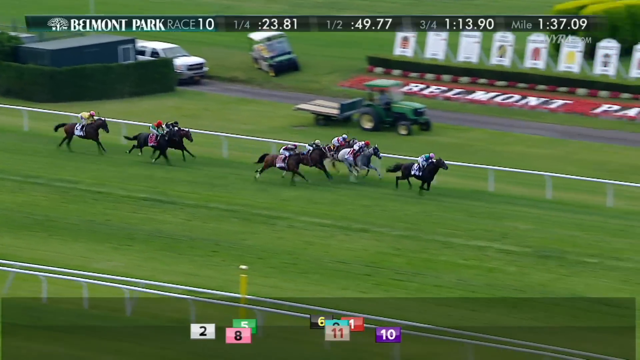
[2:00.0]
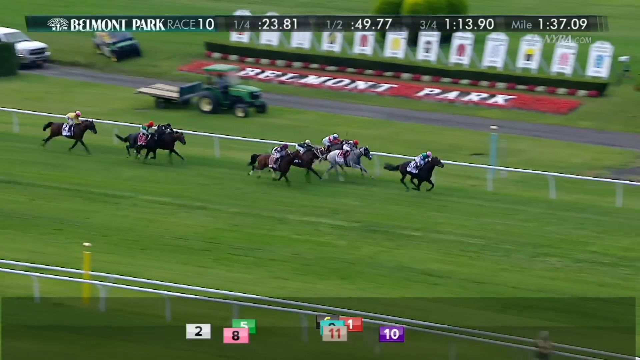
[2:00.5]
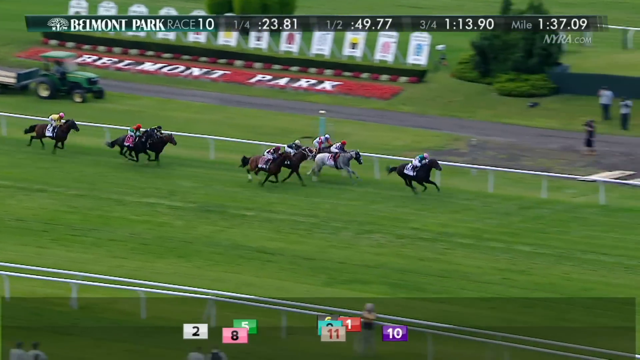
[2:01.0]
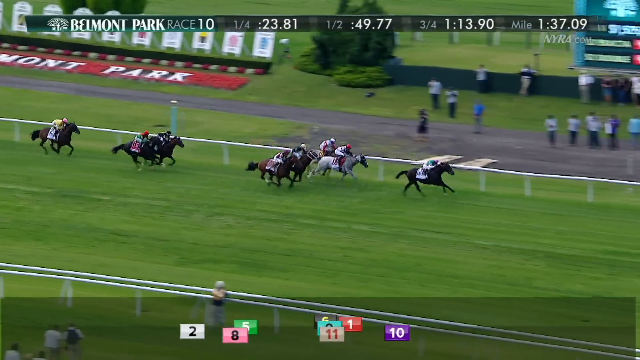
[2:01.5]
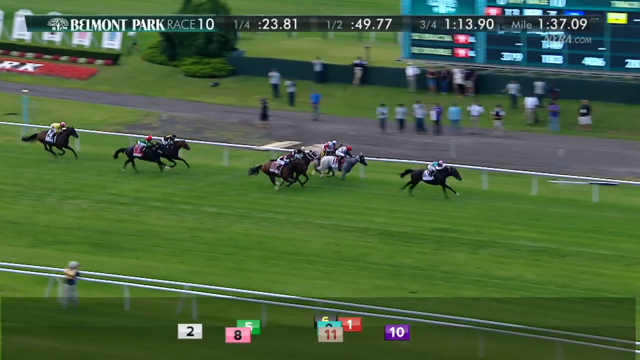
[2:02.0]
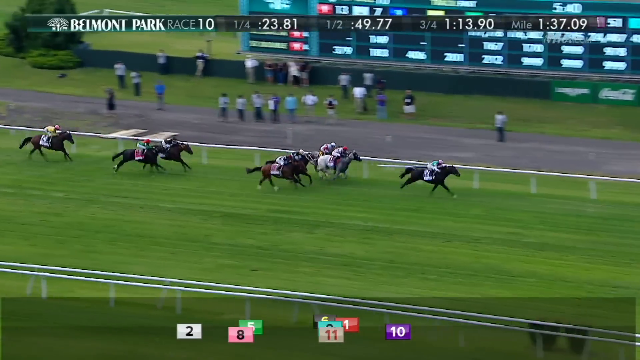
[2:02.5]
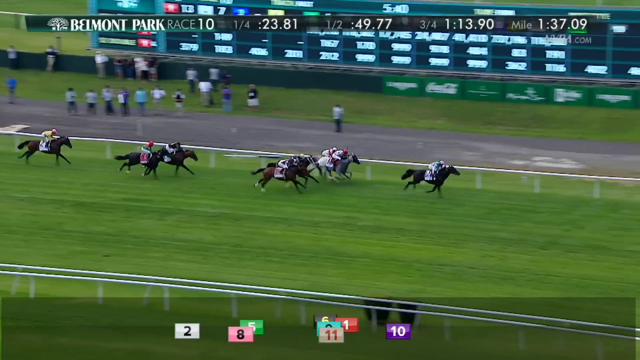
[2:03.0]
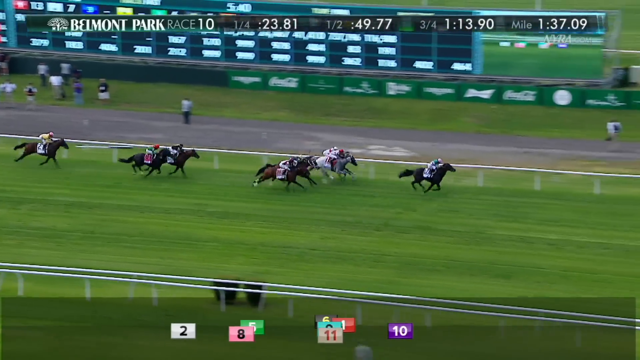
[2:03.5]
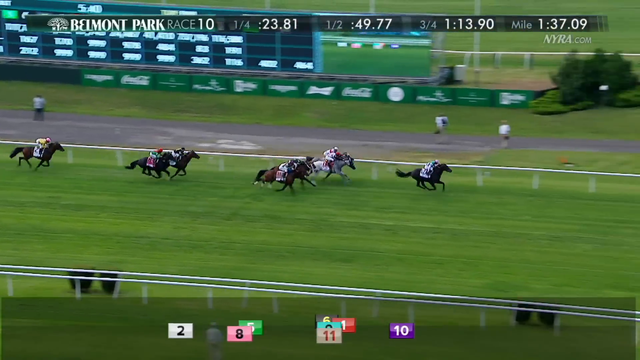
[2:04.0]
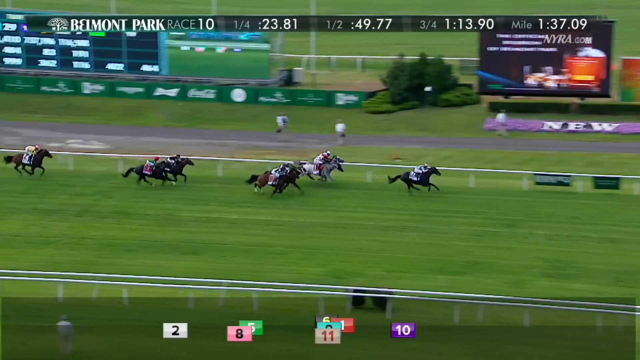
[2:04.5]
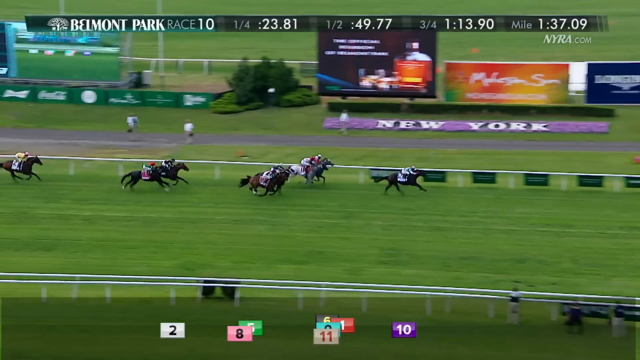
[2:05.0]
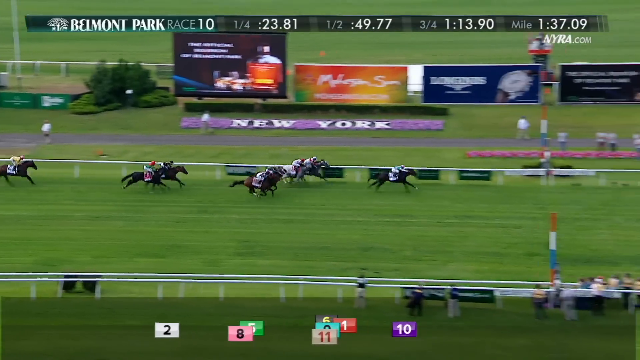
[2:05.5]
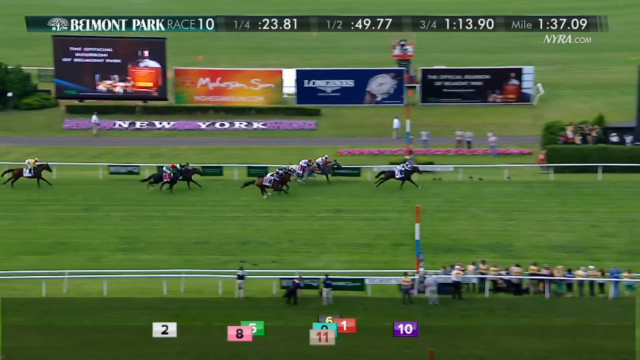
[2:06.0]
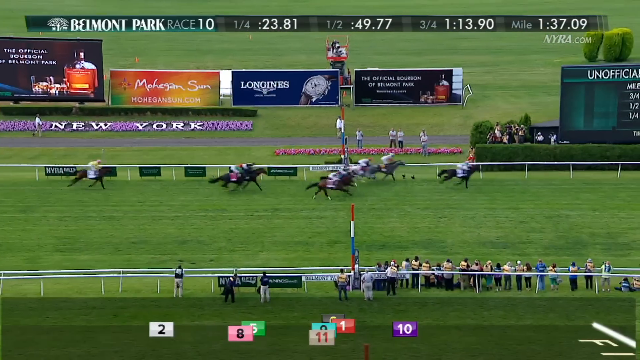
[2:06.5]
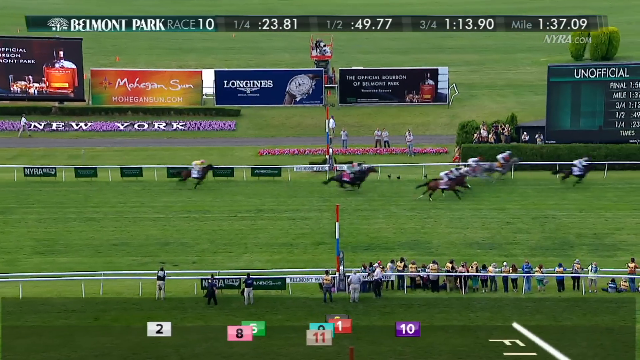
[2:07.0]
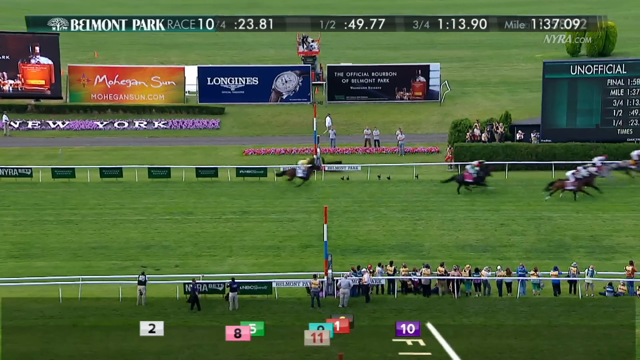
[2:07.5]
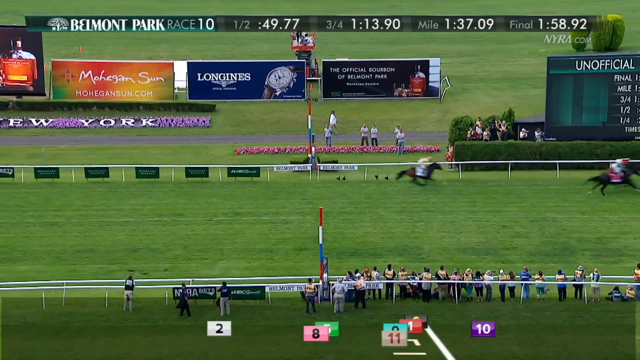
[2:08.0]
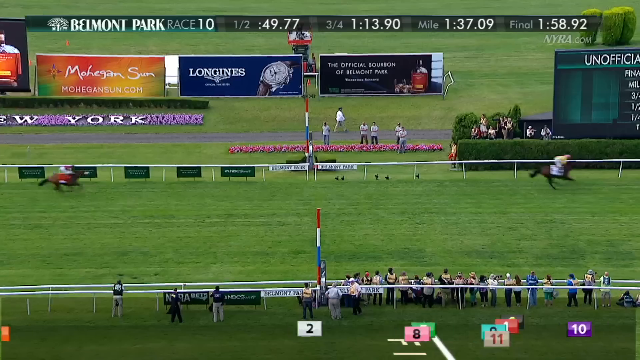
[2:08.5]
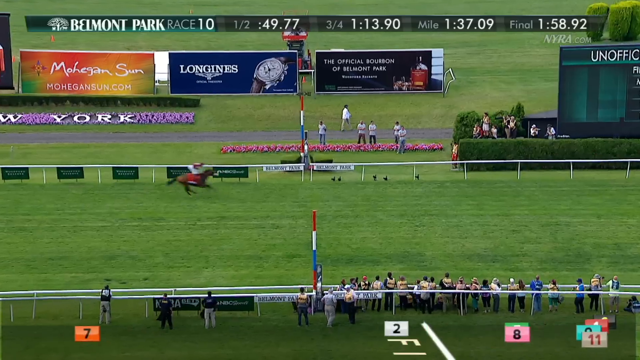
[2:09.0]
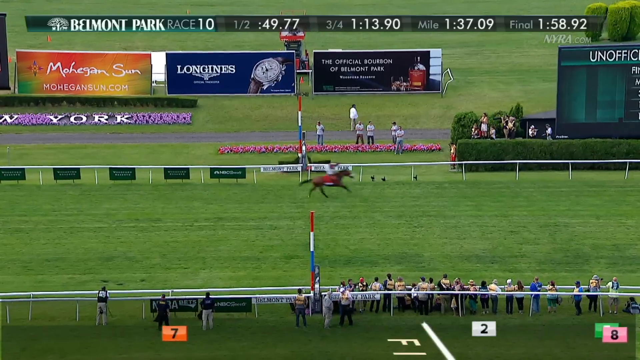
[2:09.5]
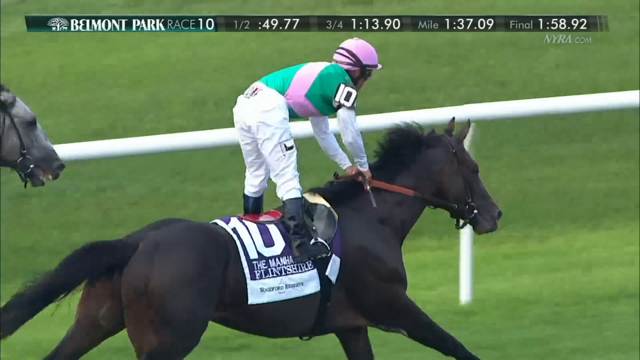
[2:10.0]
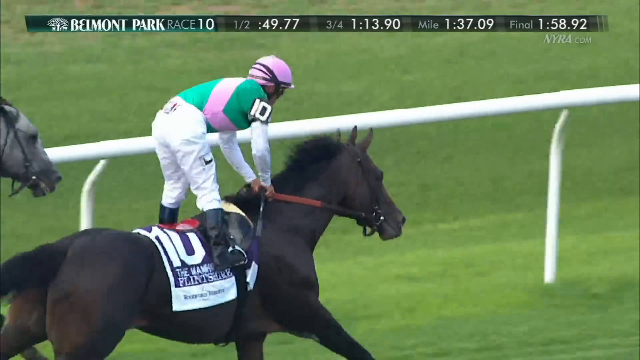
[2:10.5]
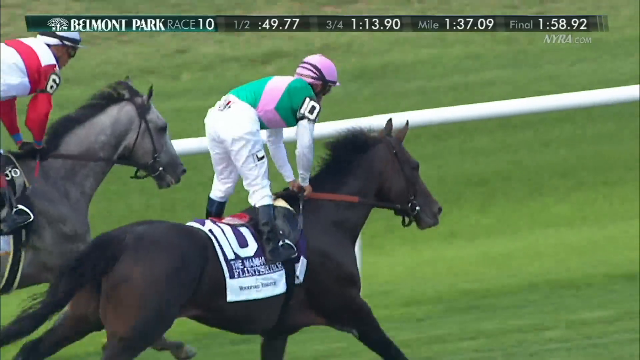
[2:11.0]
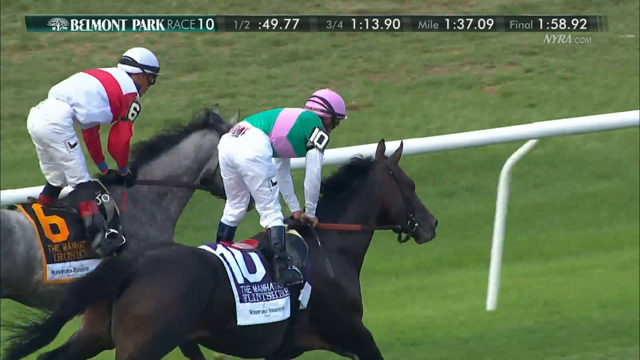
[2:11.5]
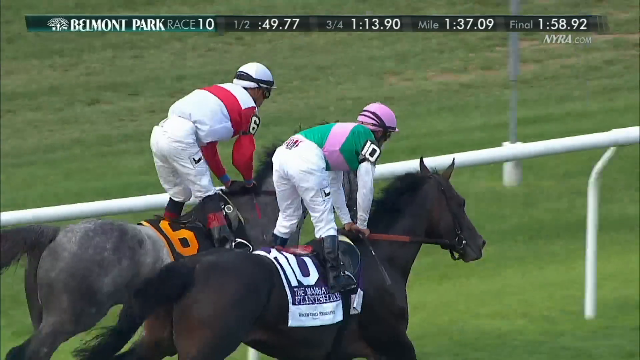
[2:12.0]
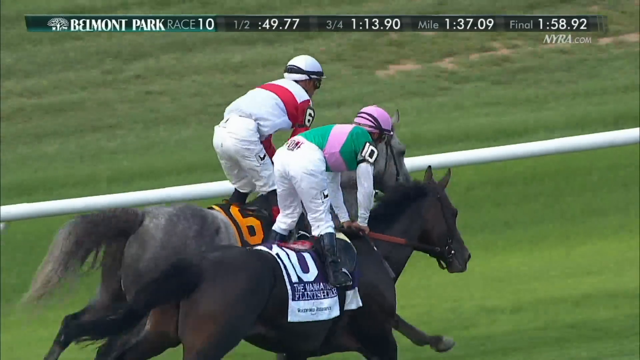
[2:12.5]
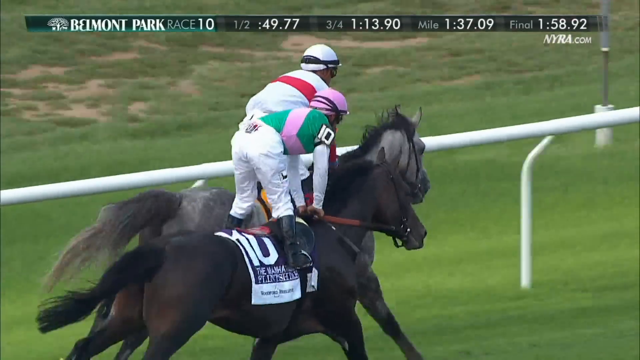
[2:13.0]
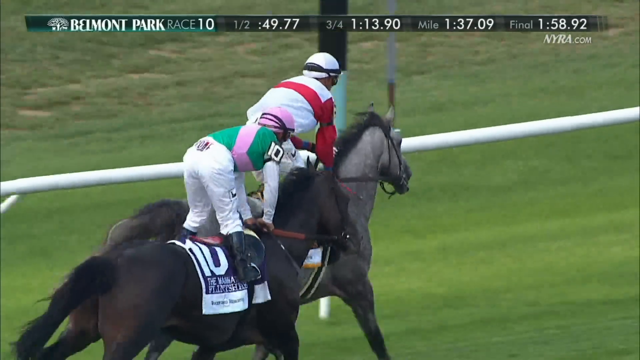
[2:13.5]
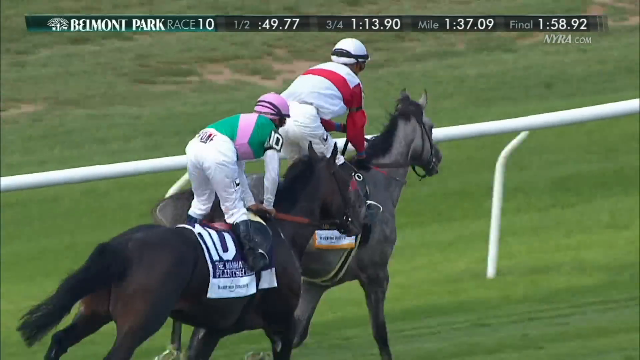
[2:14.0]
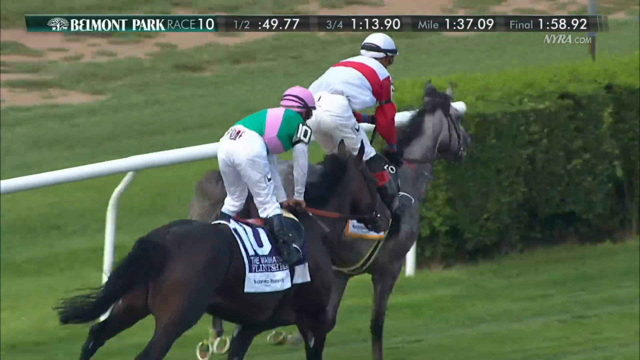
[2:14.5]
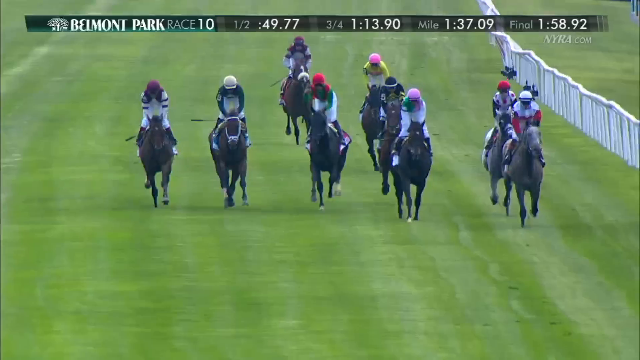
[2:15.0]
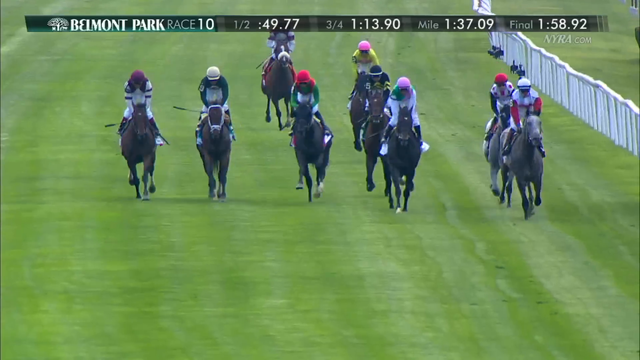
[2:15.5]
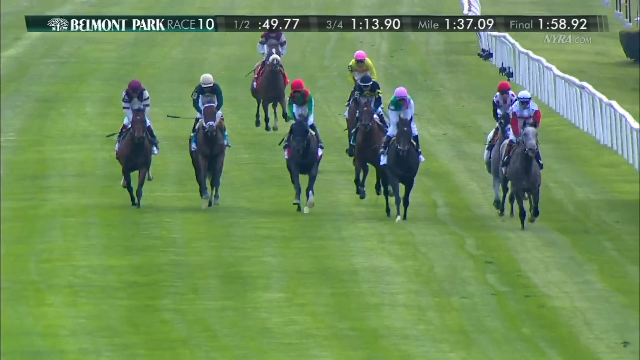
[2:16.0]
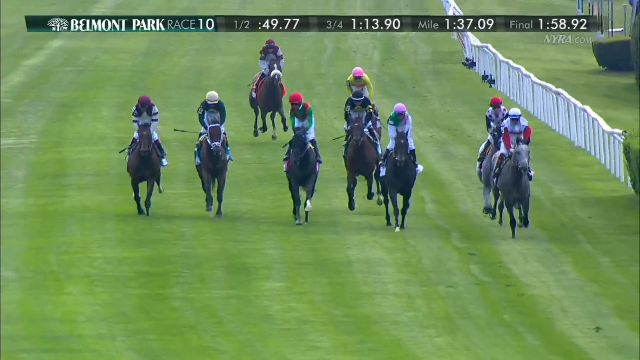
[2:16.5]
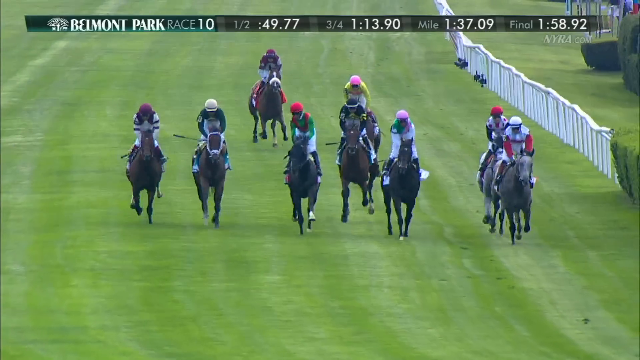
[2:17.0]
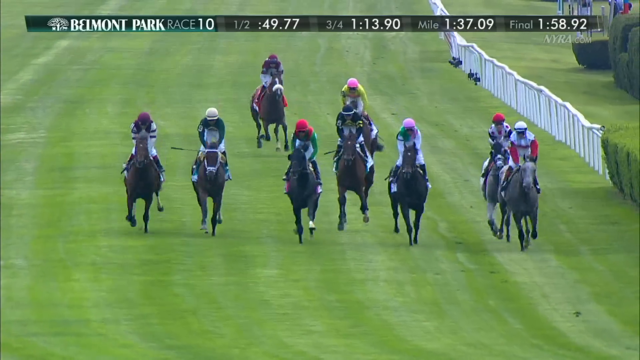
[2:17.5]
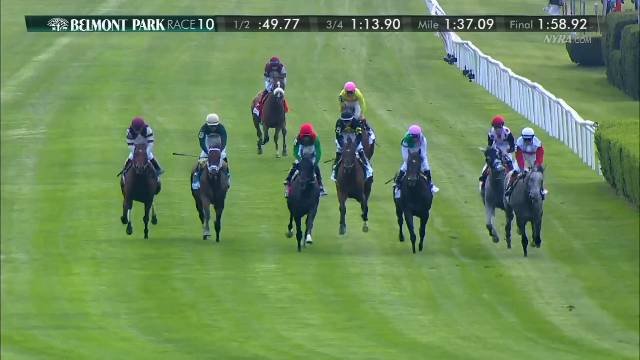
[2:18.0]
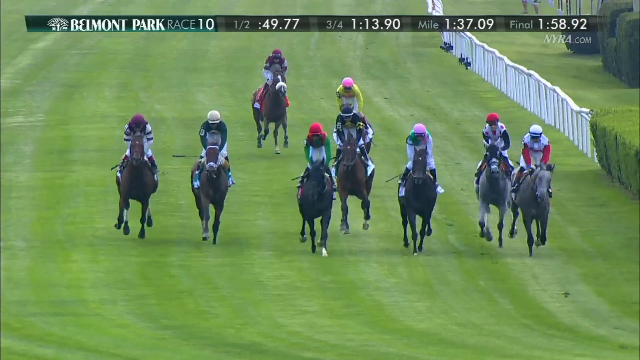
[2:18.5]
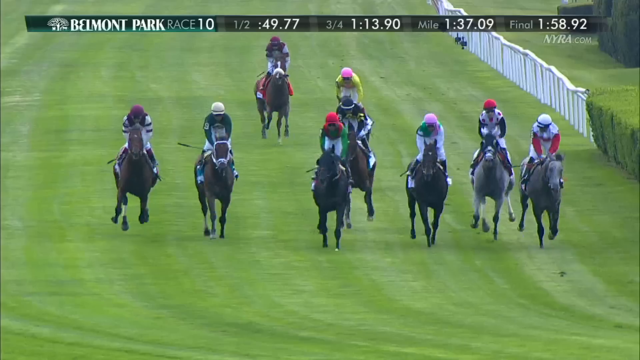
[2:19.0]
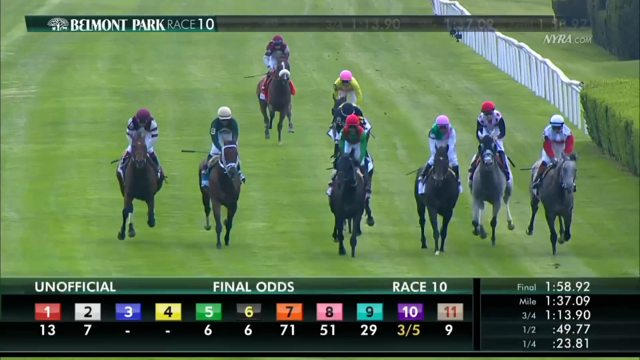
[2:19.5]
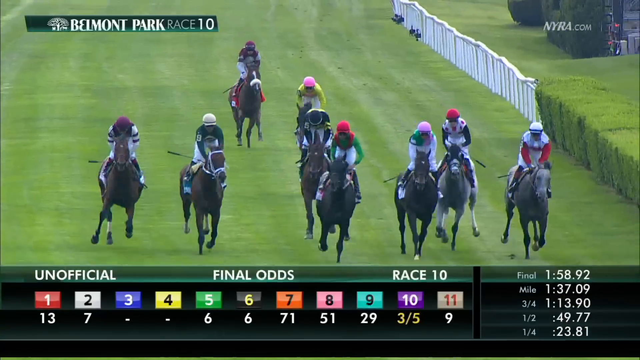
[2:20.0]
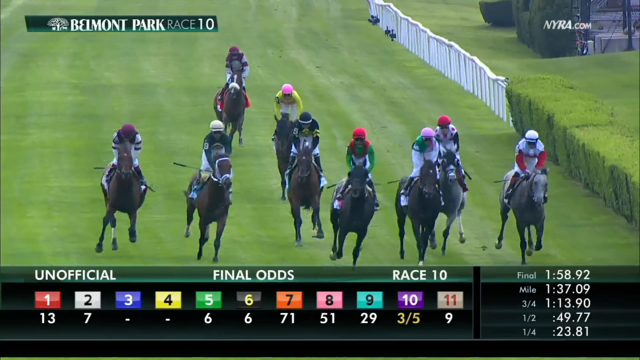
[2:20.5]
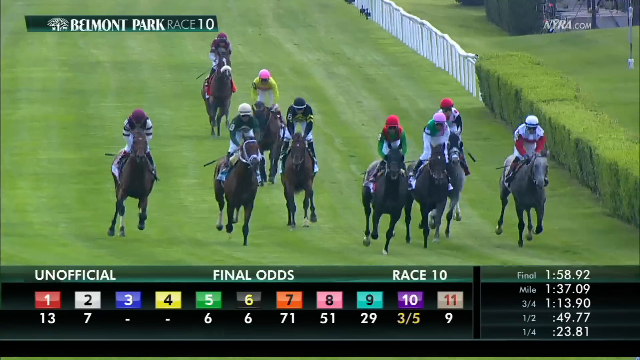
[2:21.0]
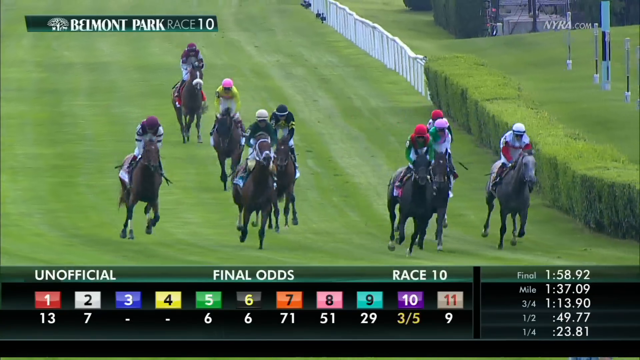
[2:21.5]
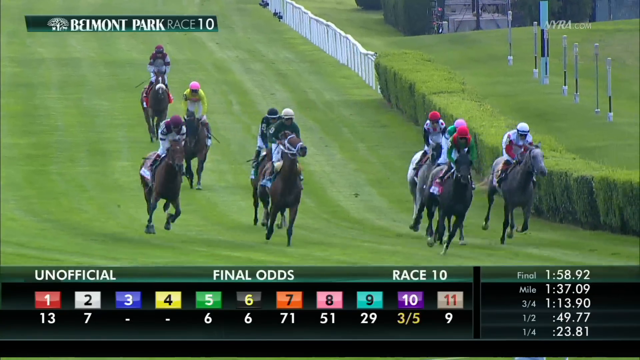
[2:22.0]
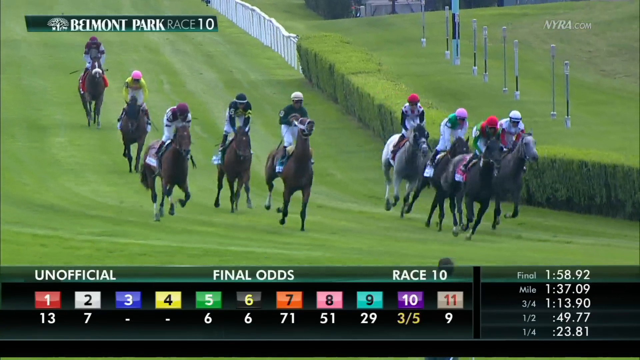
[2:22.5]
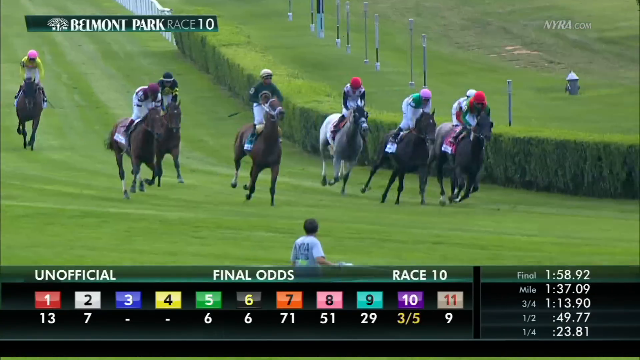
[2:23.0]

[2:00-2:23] What appears to be a horse race is shown with "Belmont Park Race 10" at the top, along with a quarter time of 23.81, a half-mile time of 49.77, a three-quarter-mile time of 1:13.90 and a mile time of 1:37.9. Flintshire is in first with a decent lead, having gone past all the rest of the horses, and finishes the race in first. All the horses gallop past the finish line. A replay then shows the final push, with Flintshire going the distance to finish in first place. The park and the track look very green. As the horses run down the track, spectators are visible along the outside of the track, along with advertisements on little billboards around the outside.